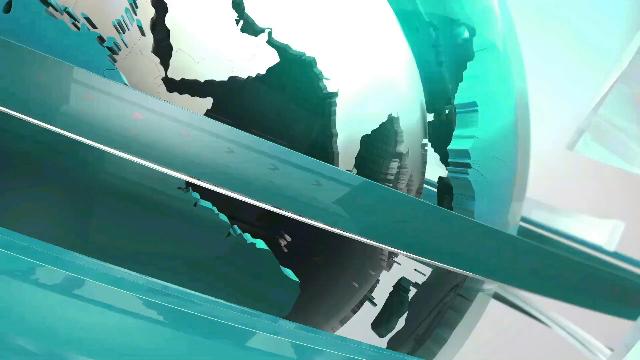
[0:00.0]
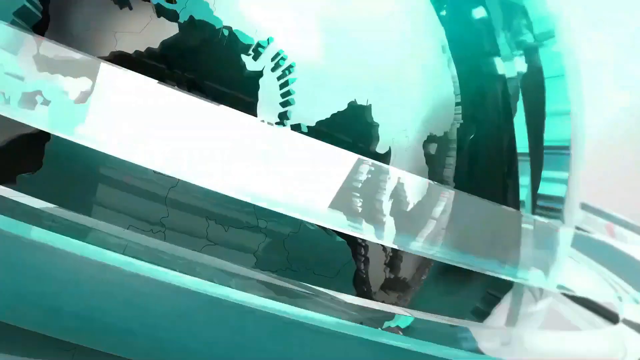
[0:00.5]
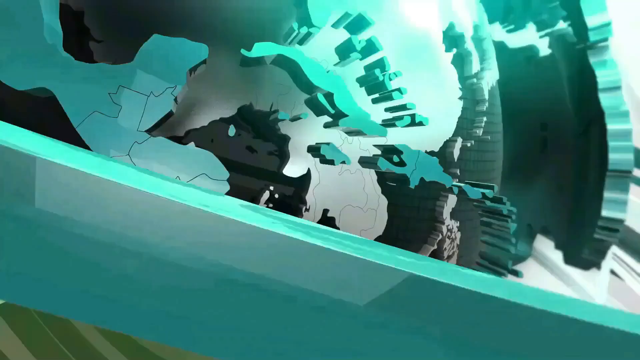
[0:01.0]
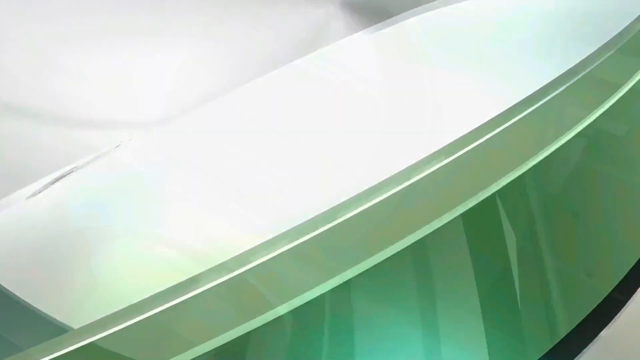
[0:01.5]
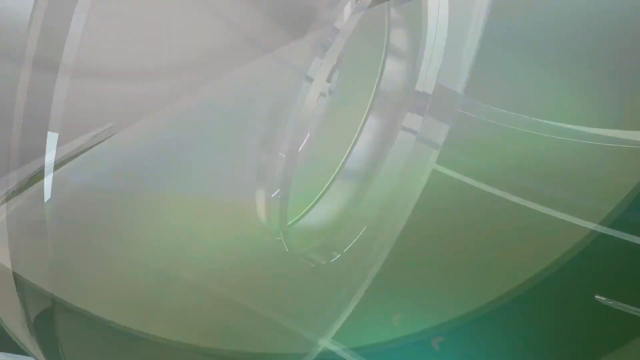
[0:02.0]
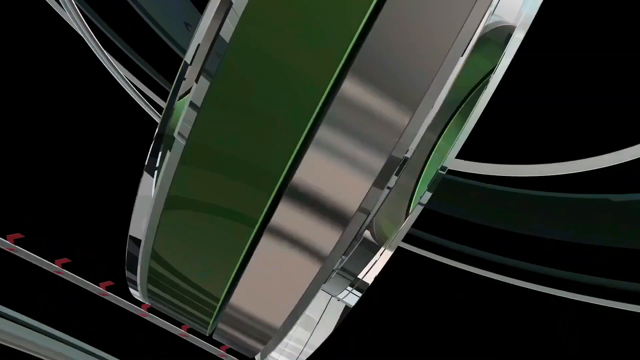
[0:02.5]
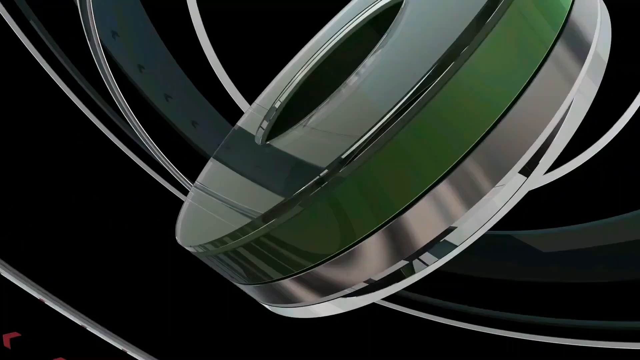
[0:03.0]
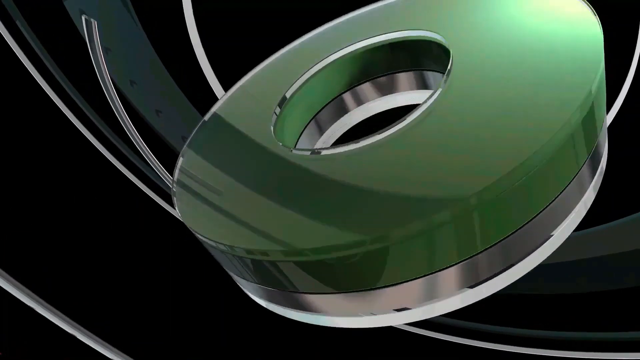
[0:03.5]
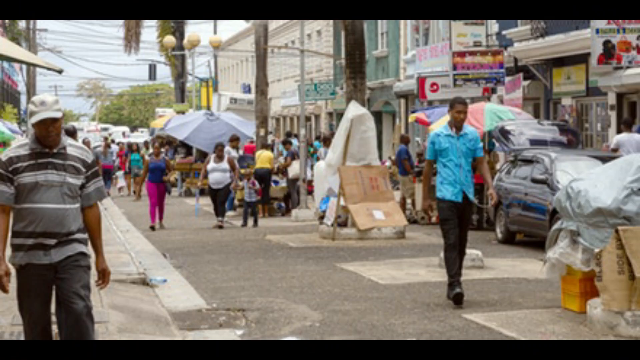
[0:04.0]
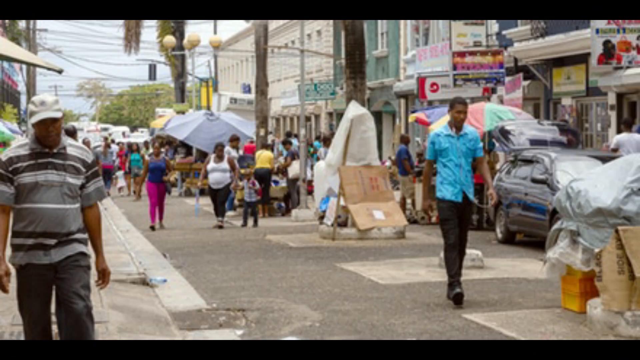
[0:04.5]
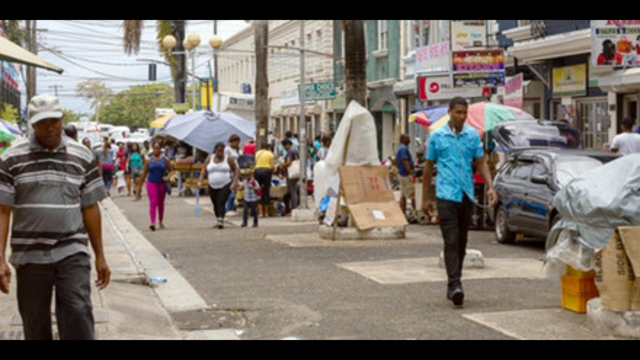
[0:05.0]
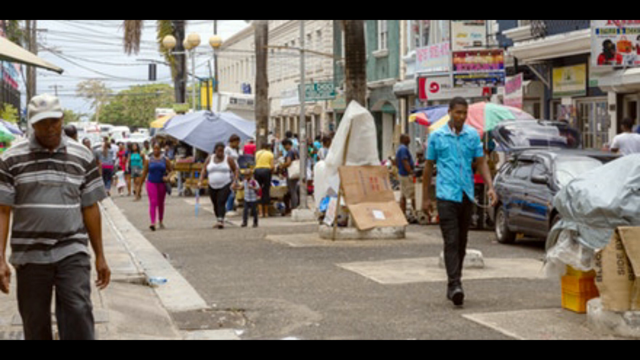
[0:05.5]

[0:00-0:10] The video opens with a graphic that is likely the beginning of some kind of news program, maybe: a globe of the earth with rings going around it. Everything looks kind of like stone, maybe even metallic, in teal and kind of aqua colours as it spirals around and zooms in. It then transitions to a still image of a foot-traffic street. On the right-hand side, shops line the street with tons of signs up. There are also some umbrellas up, which look like they might be stands. A sidewalk is on the left. People are generally moving toward the camera. A car is kind of parked by an umbrella on the right-hand side; what is in front of it cannot be seen exactly, but a big pile of tarped boxes is in the lower right-hand corner. The picture stays on screen for a while.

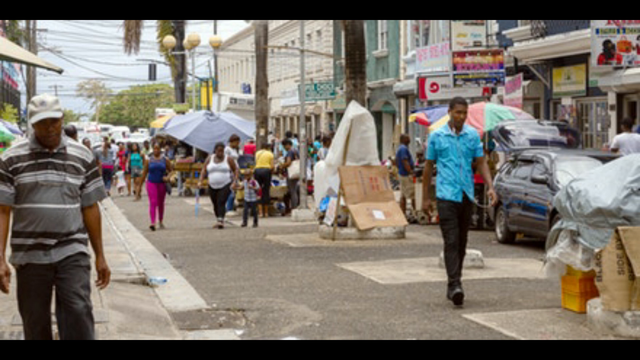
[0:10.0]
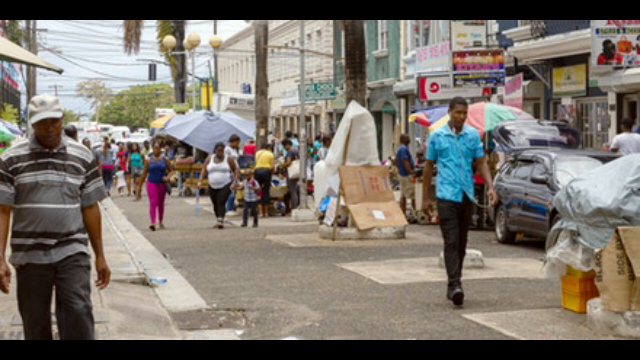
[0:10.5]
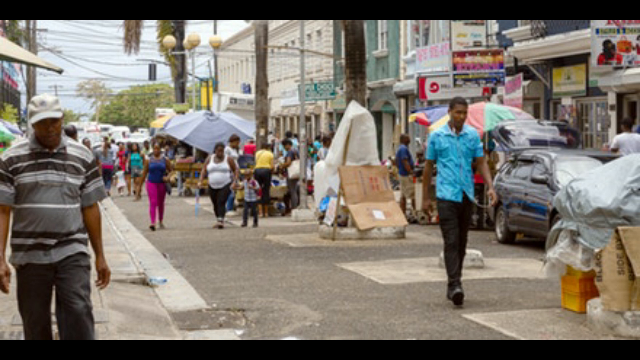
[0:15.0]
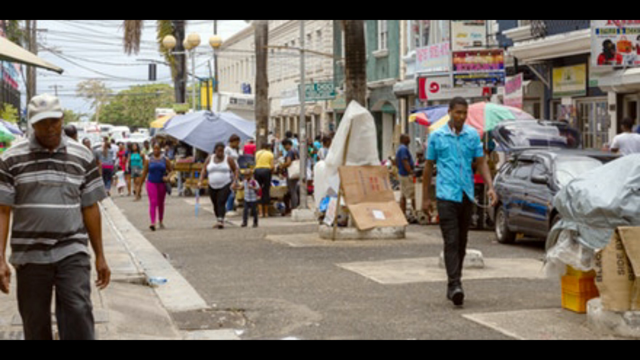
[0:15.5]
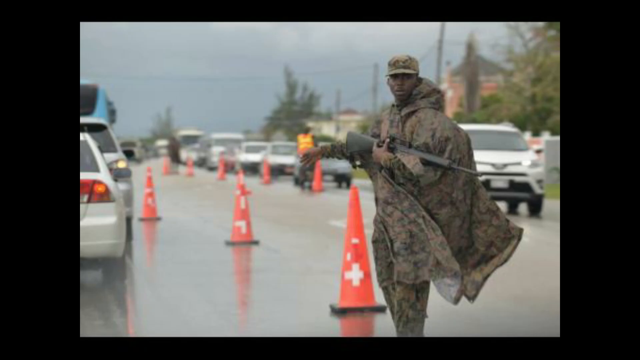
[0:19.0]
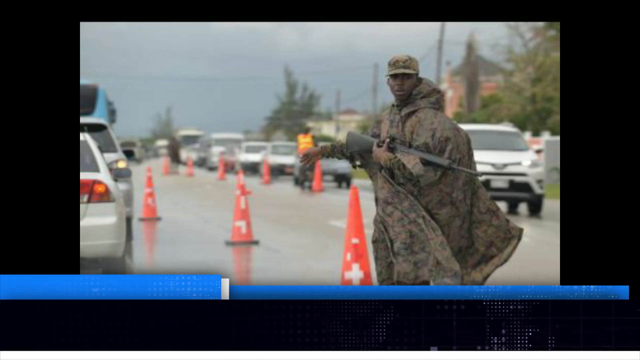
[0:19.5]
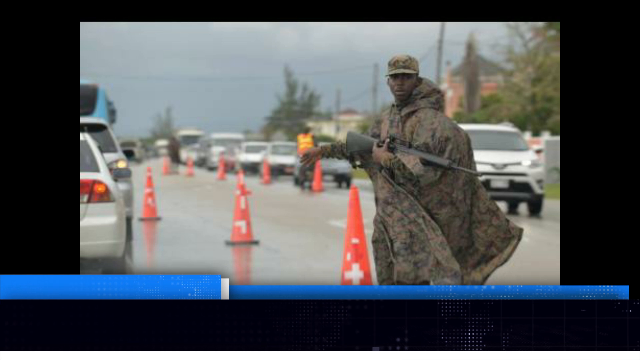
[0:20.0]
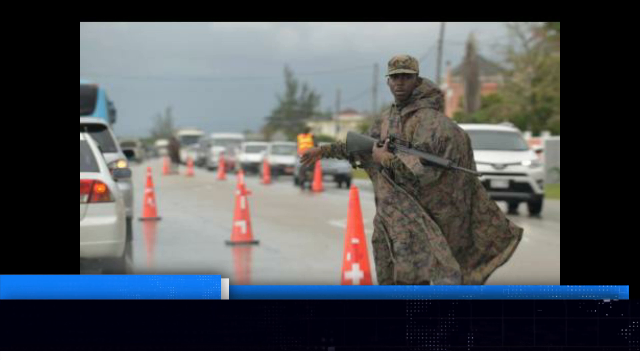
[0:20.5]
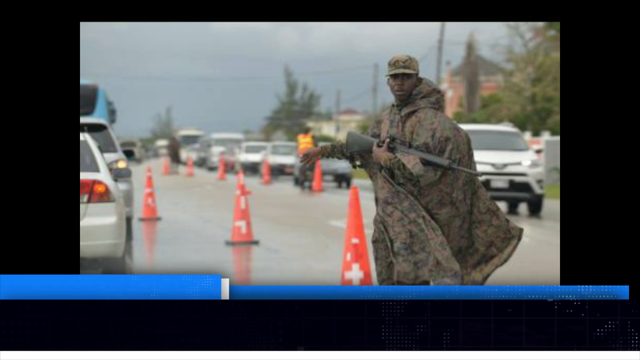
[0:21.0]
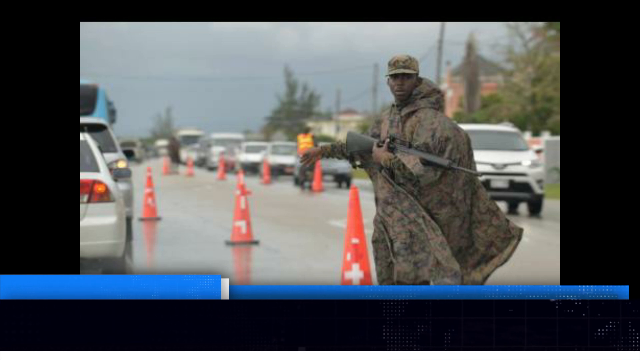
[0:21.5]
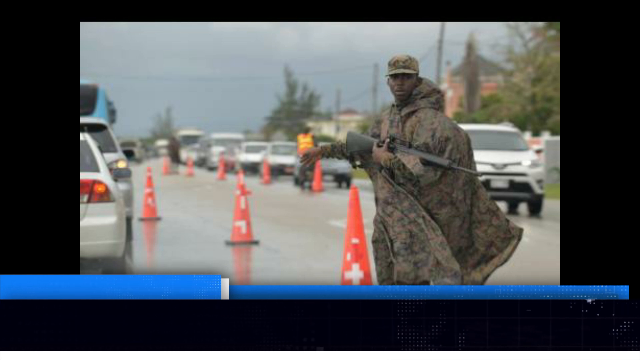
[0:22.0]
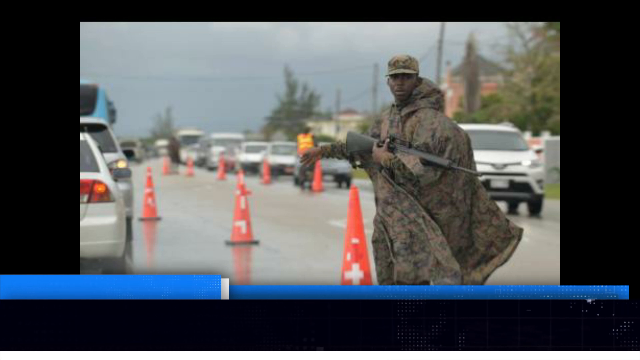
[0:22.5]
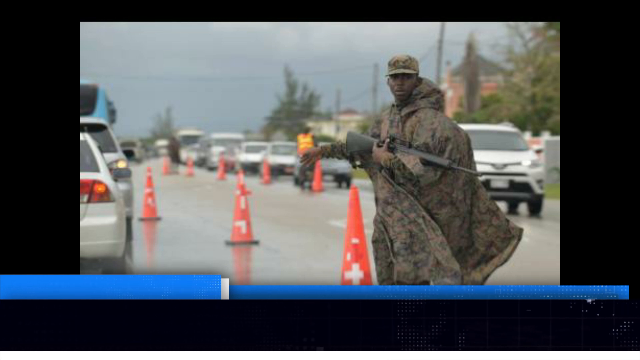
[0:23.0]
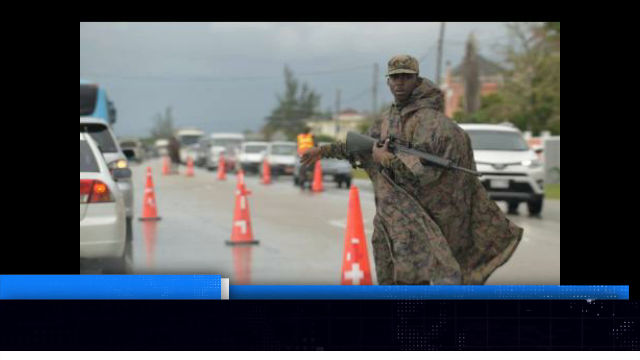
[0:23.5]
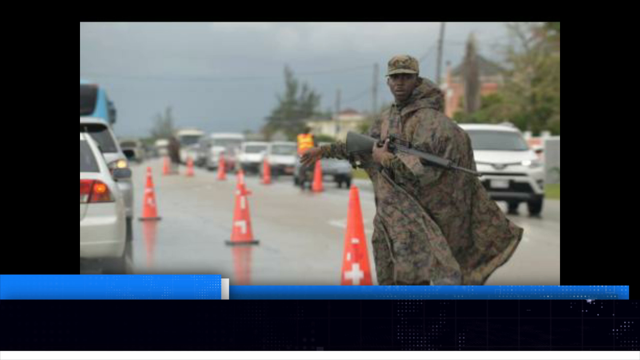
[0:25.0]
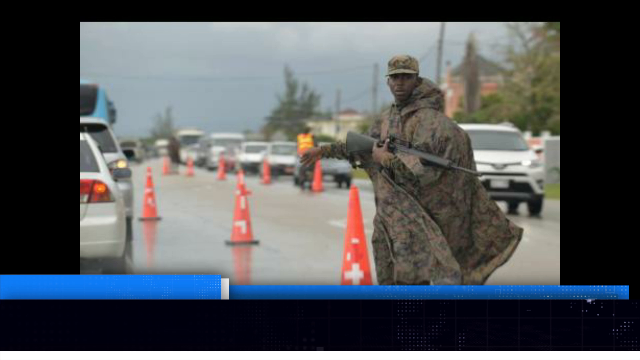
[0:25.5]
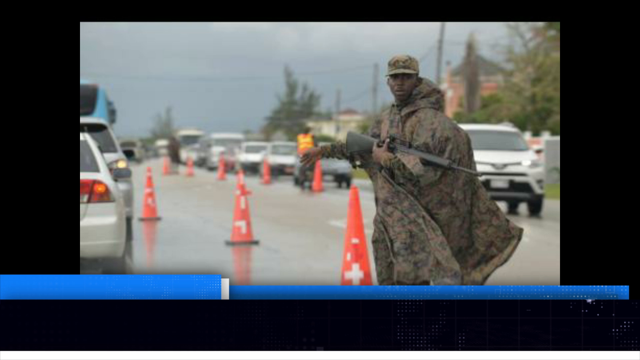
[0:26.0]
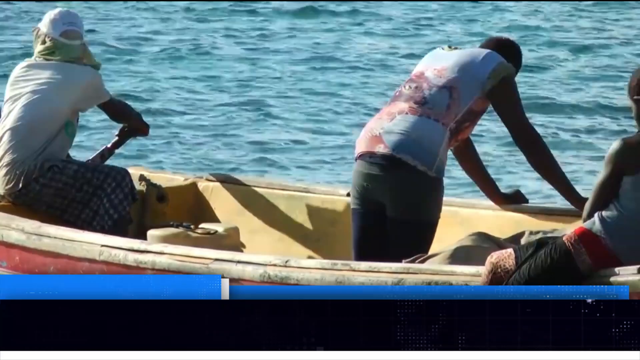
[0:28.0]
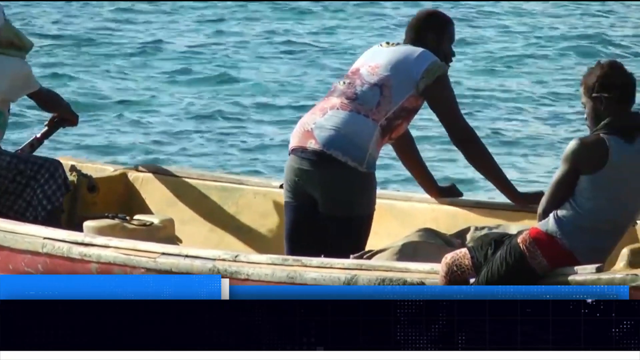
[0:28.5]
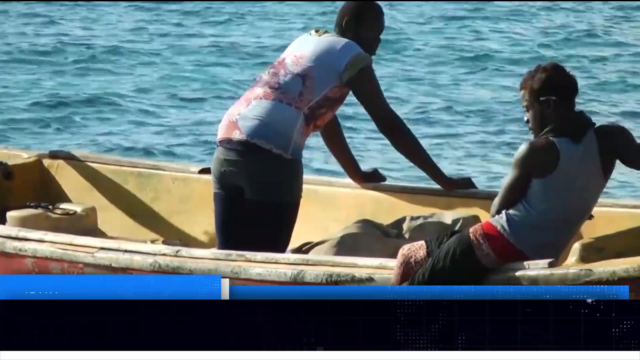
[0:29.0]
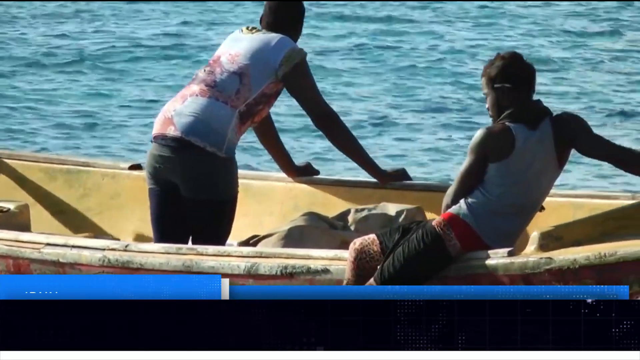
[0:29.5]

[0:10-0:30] A static image shows a foot-traffic street with people generally moving toward the camera, maybe about 20 or so, though they get a little blurry in the background, making heads hard to count. There is a sidewalk on the left-hand side, a parked car right along the center of the right-hand side, and in the lower right-hand corner a bunch of boxes with a tarp attached to just the top ones. Further in the distance some umbrellas are set up, likely for street vendors. Along the right-hand side is a row of two-story buildings, many with a business sign in front of them, making it a street people typically walk down to shop. The people have darker skin and look African in descent. The video then moves to another image in the middle of a street lined with cones. A man on the right-hand side in a lot of camo holds a rifle of sorts and faces the camera.